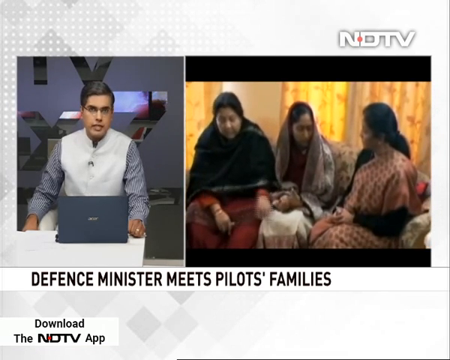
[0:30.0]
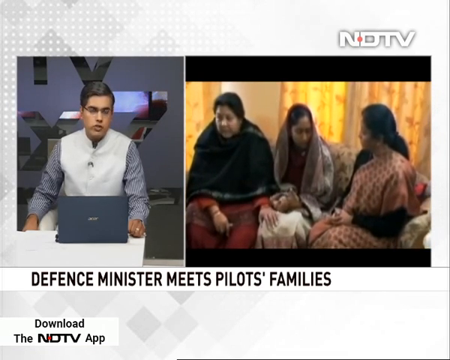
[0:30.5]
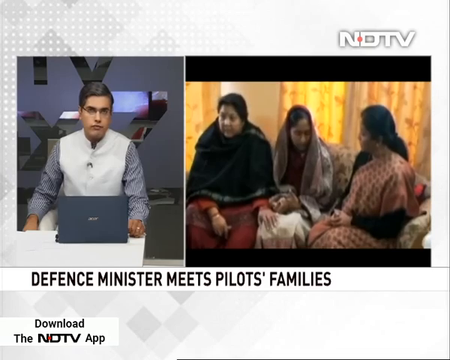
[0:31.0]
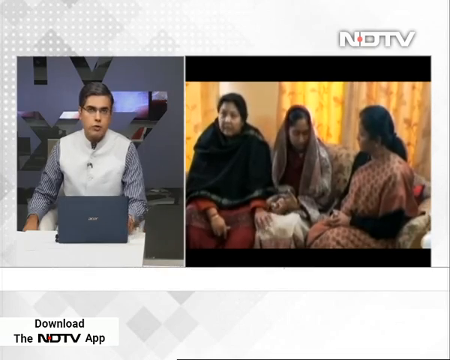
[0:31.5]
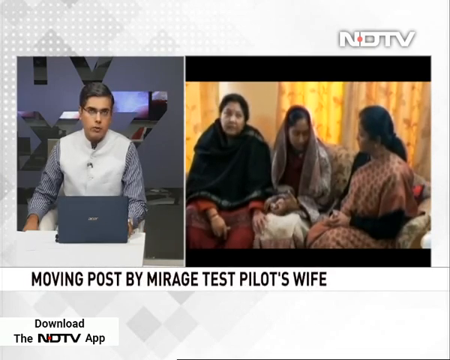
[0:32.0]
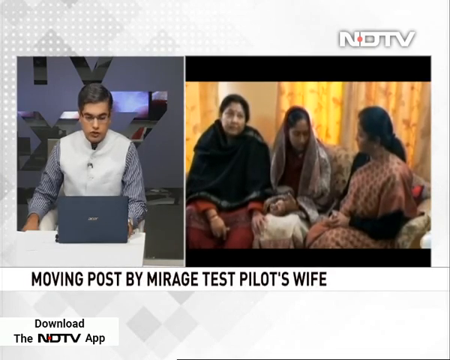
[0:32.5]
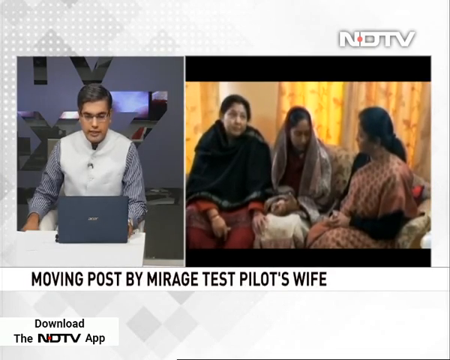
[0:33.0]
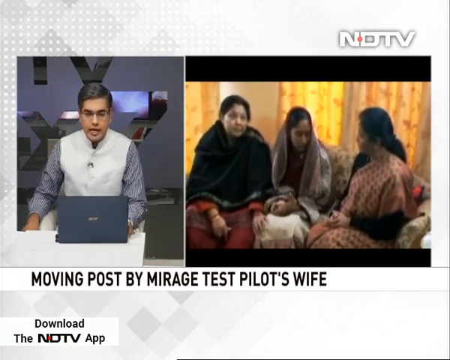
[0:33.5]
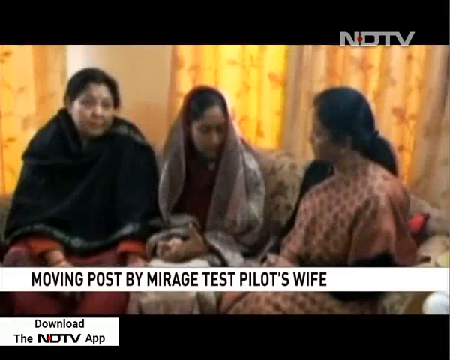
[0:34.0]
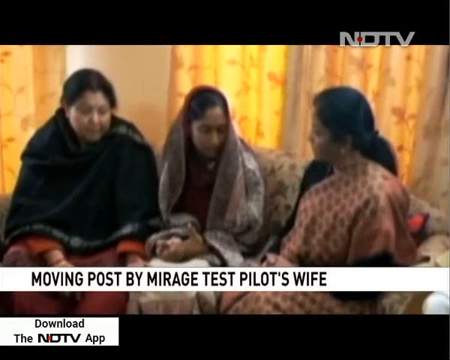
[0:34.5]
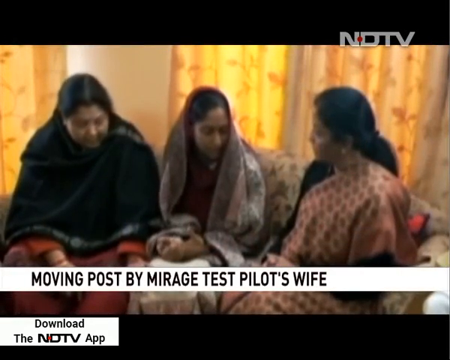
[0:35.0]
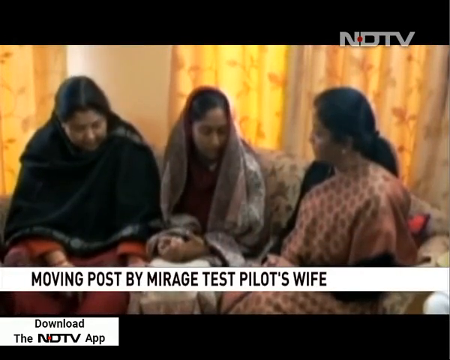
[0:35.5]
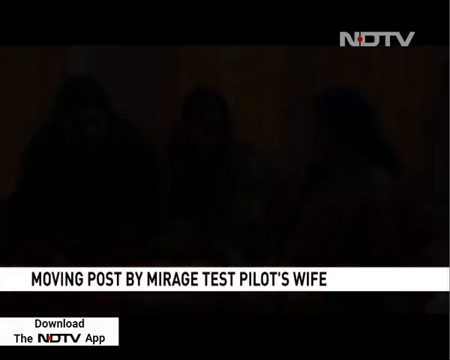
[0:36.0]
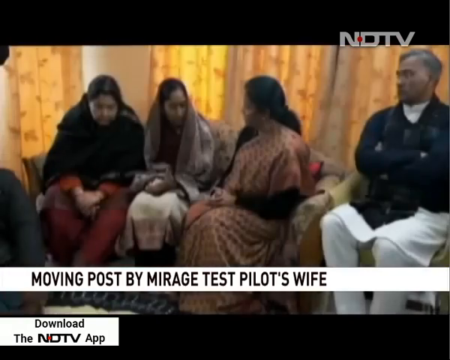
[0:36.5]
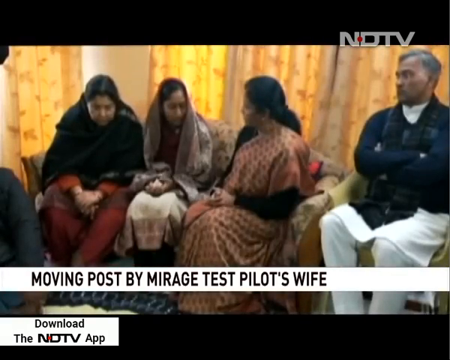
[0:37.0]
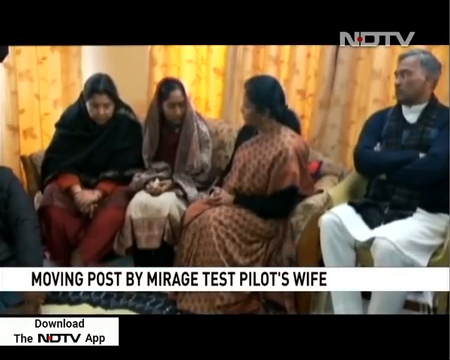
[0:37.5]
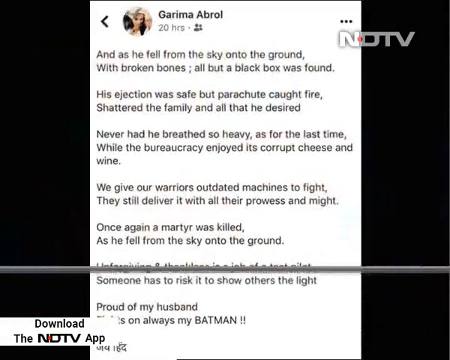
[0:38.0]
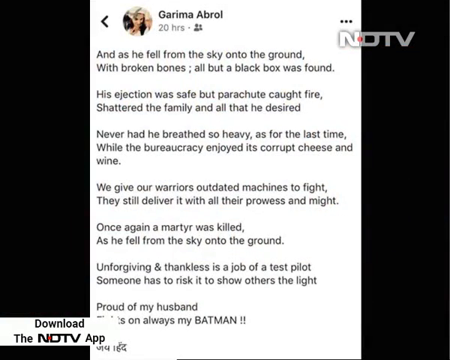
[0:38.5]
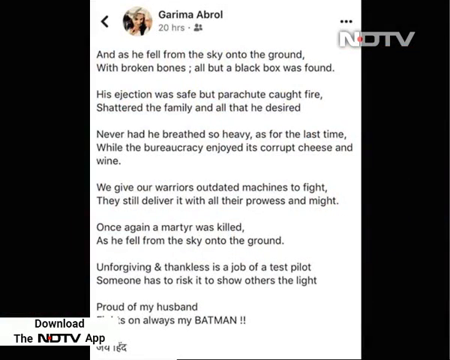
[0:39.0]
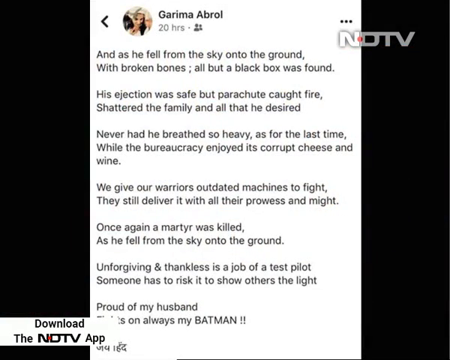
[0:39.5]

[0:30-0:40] An Indian news reporter appears, with the word "NDTV" at the top right. He sits very comfortably in front of a laptop, wearing a white waistcoat and a blue striped shirt. The heading is about the defence minister meeting pilots' families and about a plane crash. The pilot's family is then shown sitting there, very emotional and crying.